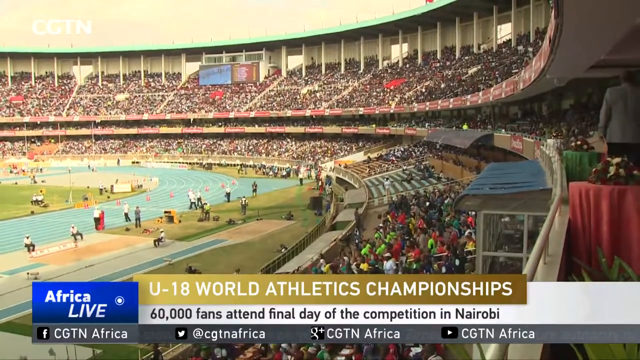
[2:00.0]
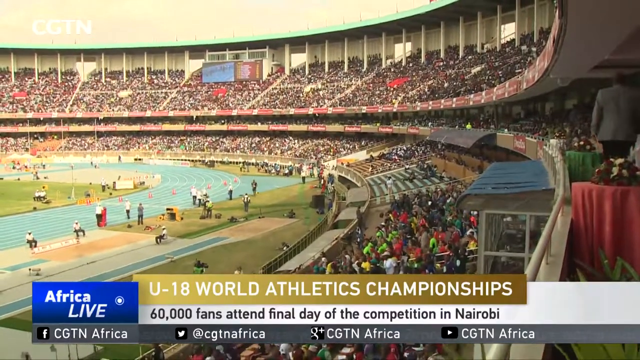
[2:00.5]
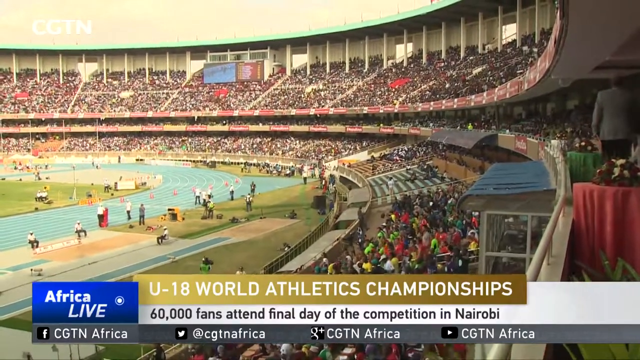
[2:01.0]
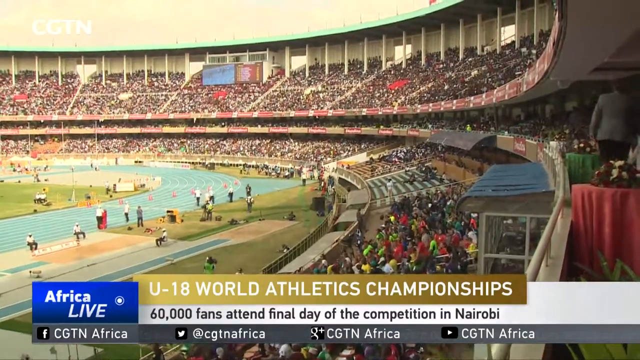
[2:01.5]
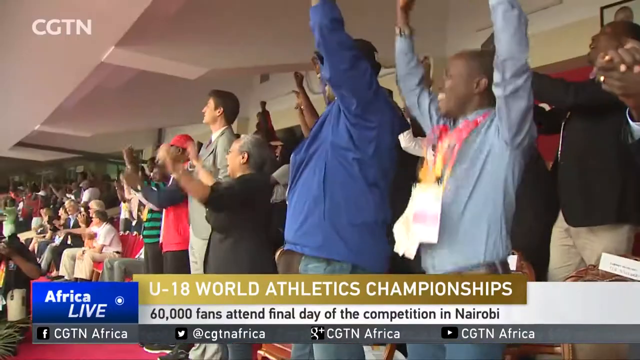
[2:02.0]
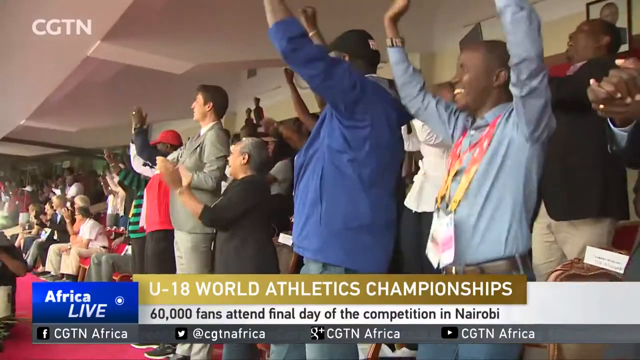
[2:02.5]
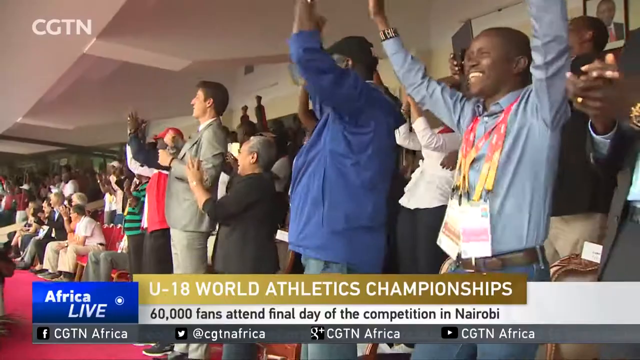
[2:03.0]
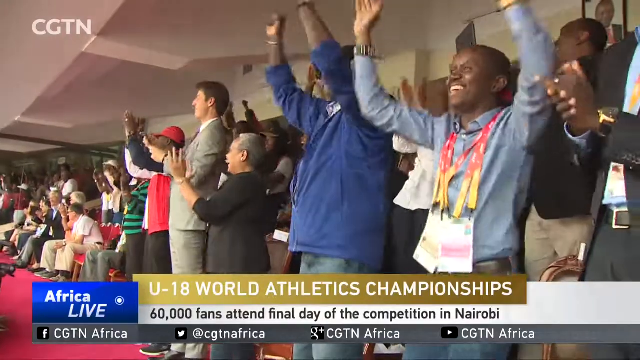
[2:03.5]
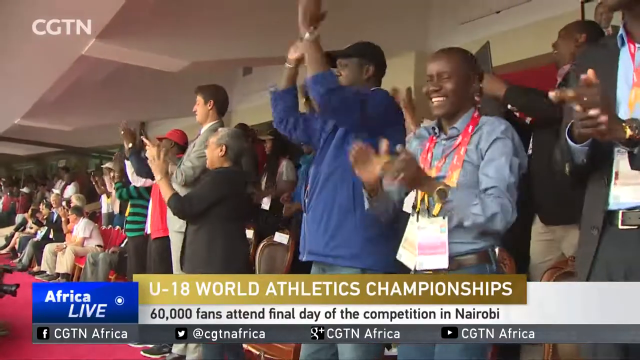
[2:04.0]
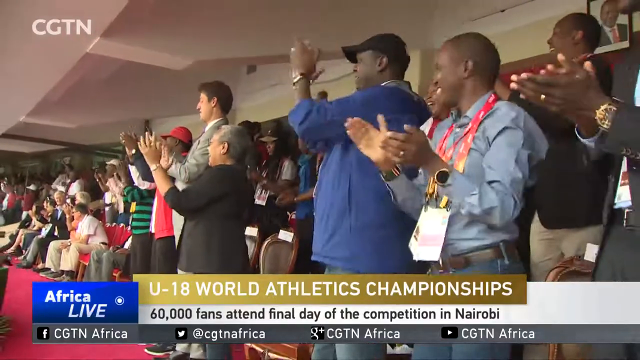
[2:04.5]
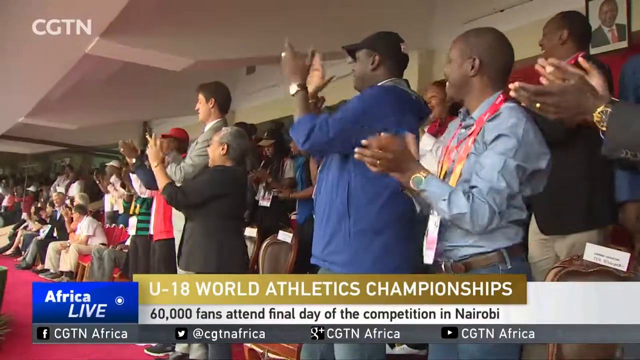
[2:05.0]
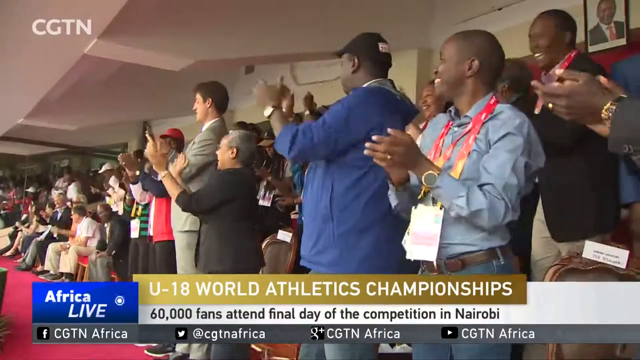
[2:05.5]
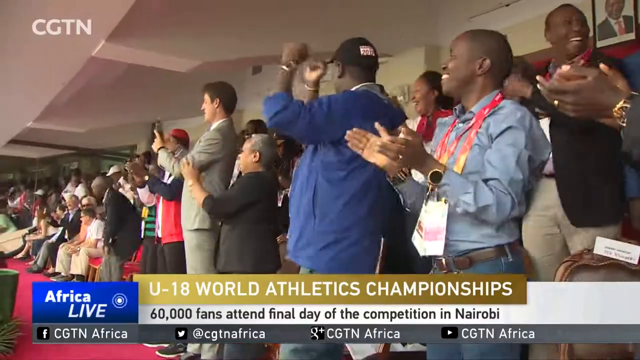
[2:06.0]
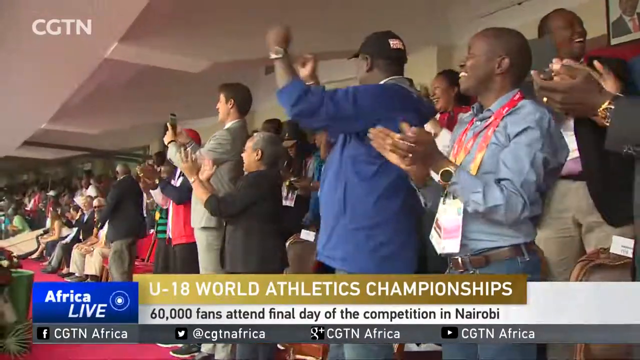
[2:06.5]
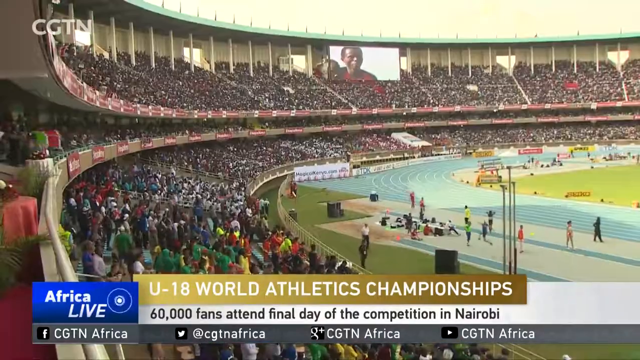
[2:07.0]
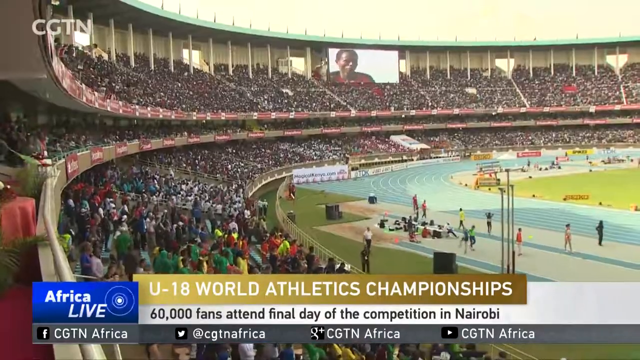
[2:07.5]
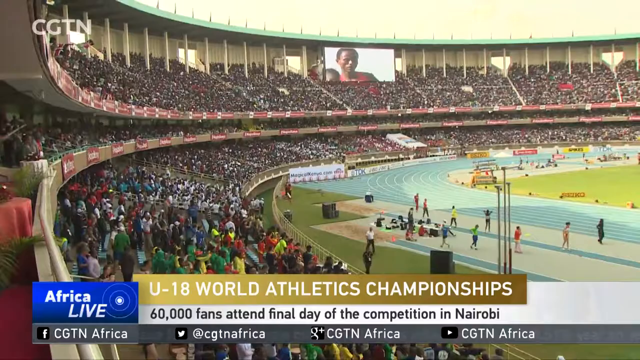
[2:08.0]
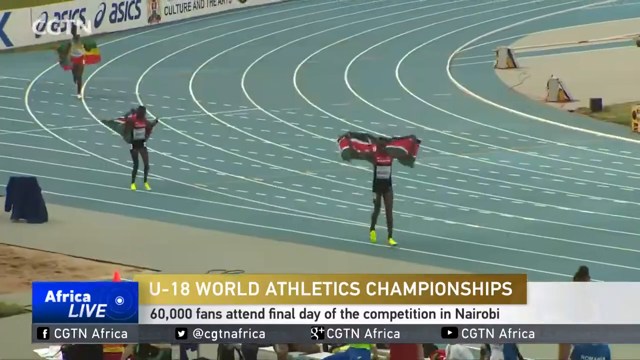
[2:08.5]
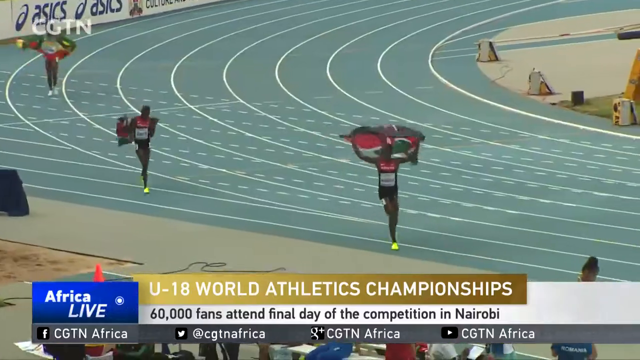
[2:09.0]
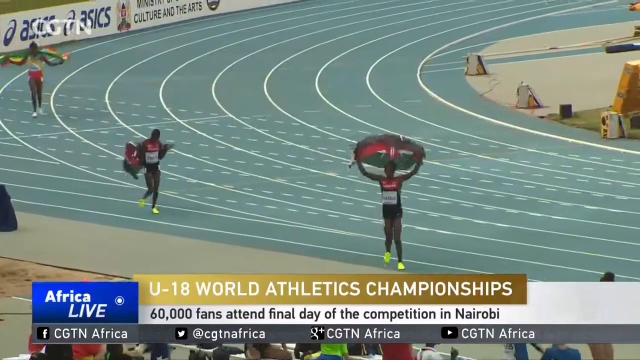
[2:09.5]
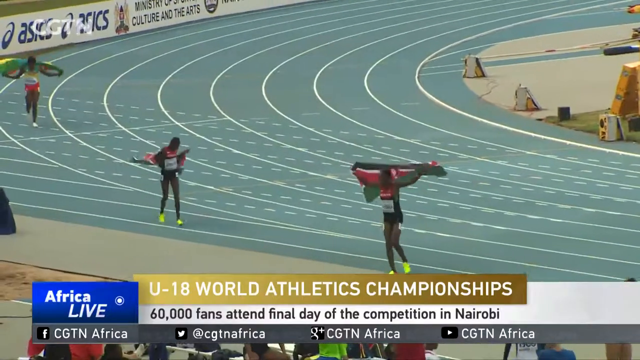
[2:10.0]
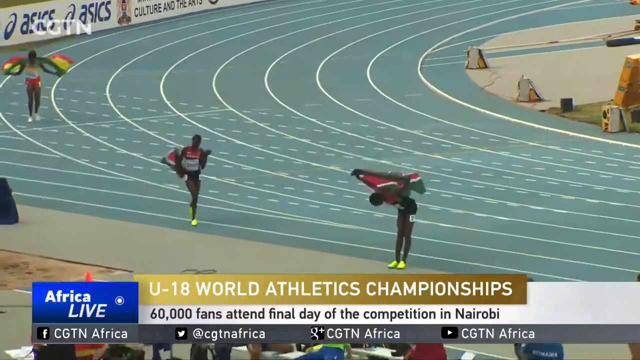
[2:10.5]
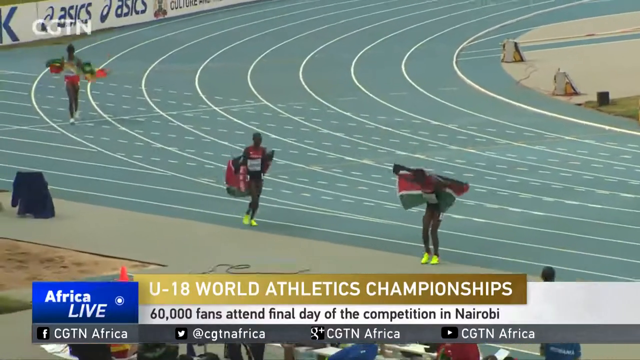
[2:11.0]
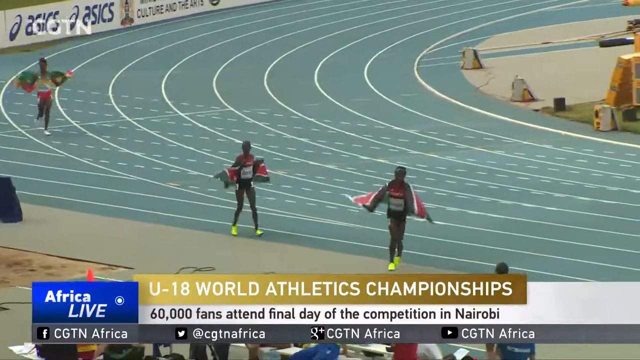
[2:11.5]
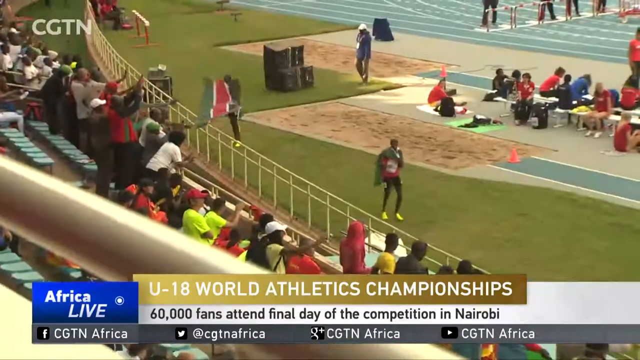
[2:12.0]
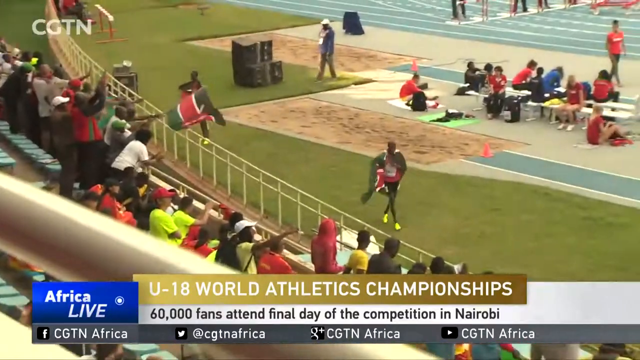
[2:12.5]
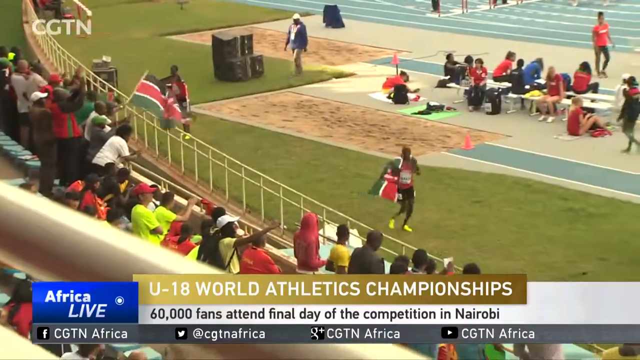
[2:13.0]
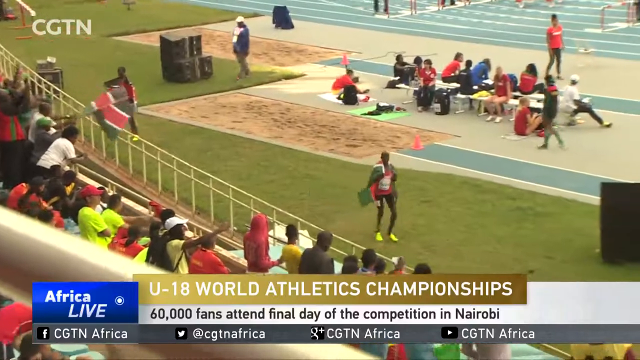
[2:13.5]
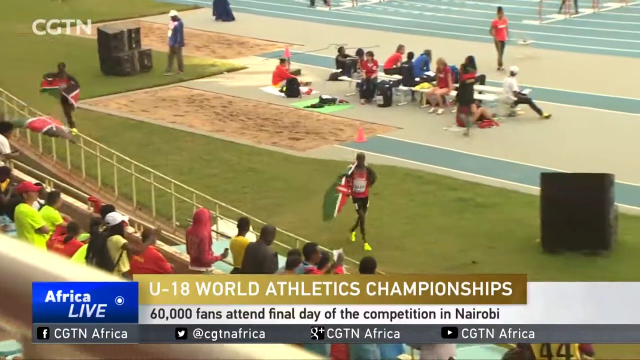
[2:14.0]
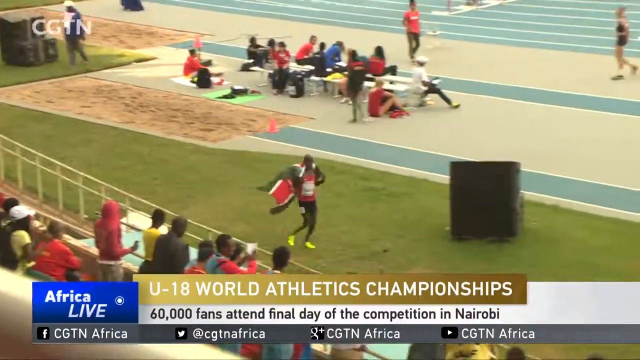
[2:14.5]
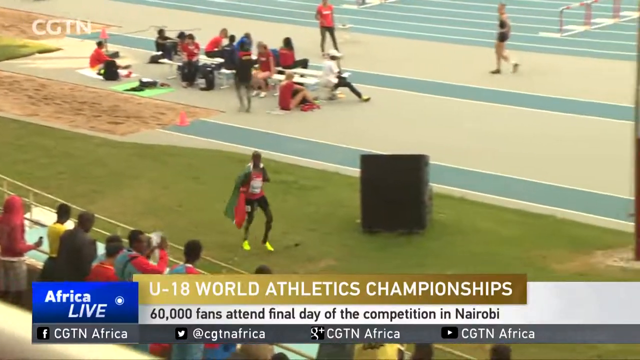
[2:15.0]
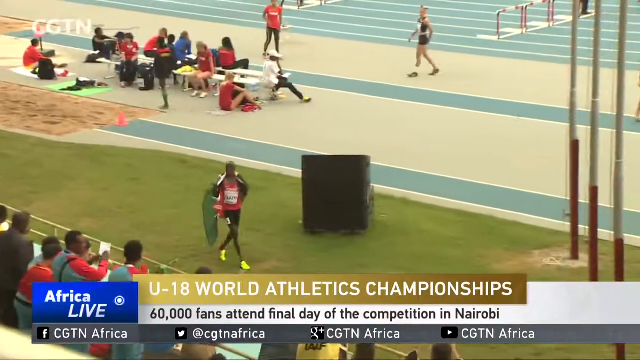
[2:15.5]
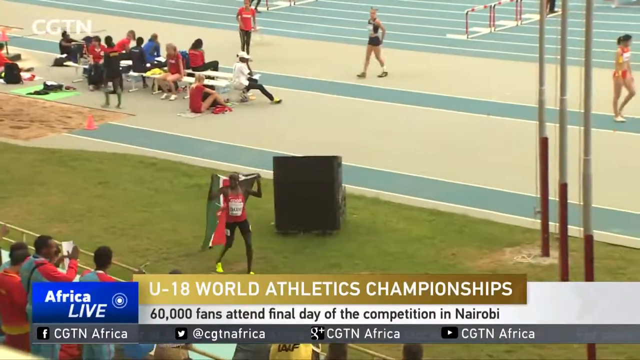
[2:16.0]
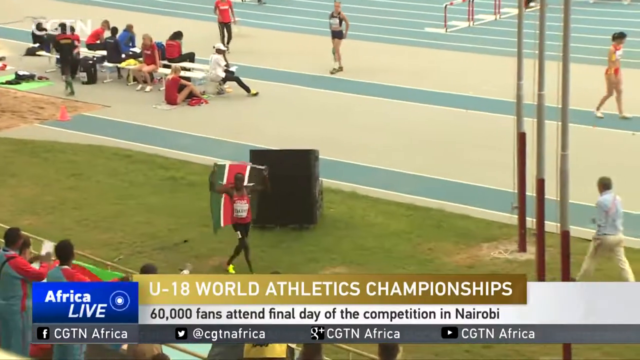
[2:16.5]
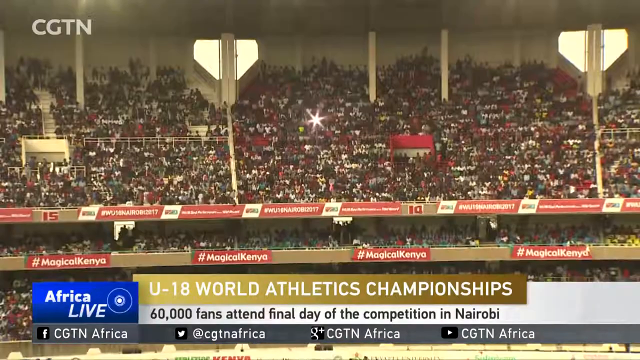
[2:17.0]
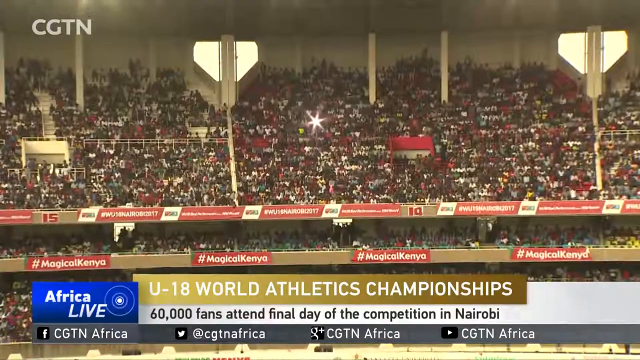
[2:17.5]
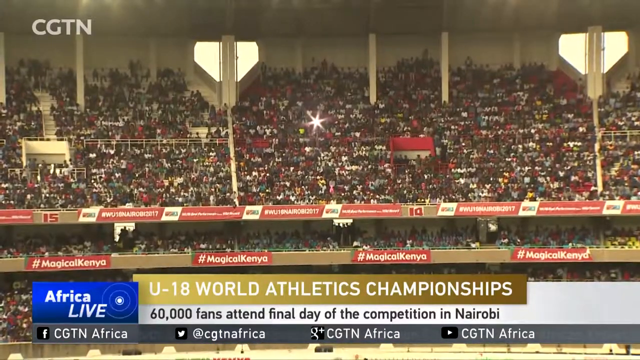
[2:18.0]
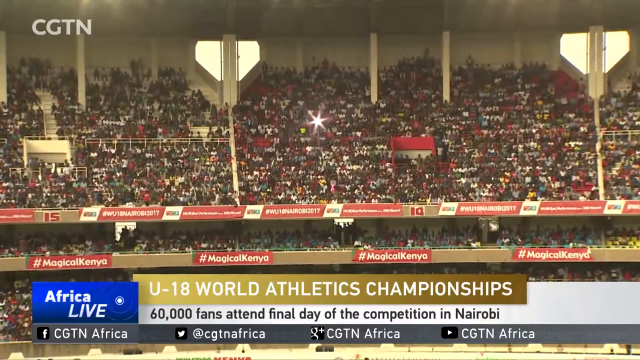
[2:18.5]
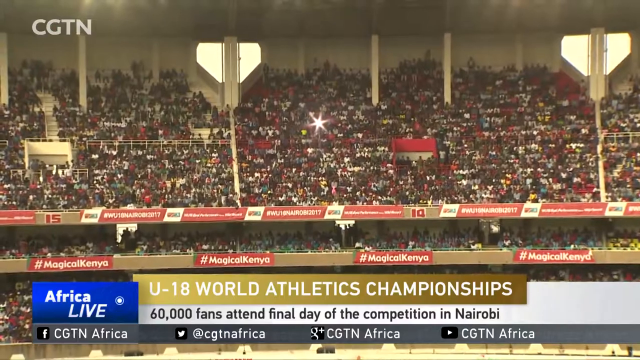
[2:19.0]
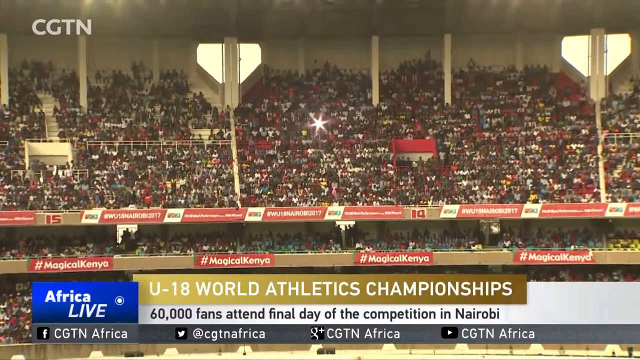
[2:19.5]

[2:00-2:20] Previously recorded footage shows a track and field event from a higher view, as if from the upper level of the stadium looking down. It is daytime, with sunlight coming through. Fans fill the stadium on the right side of the view, and athletes are at the bottom near the track and on the track. At the bottom of the screen, a gold banner on top reads "U18 World Athletics Championships" and the white banner below reads "60,000 fans attend final day of the competition in Nairobi." On the left is a small blue banner reading "Africa Live." Suddenly there is a close-up of fans and some athletes who have already won, jumping up and down and cheering with arms in the air. On the right, a young black athlete wearing two medals around his neck jumps up; he wears a light blue long-sleeve shirt, a watch on his right hand and belted dress slacks. He then claps, smiling broadly. The camera then switches to close-ups of people running with flags across their backs as they come in to their winning spots after a race.